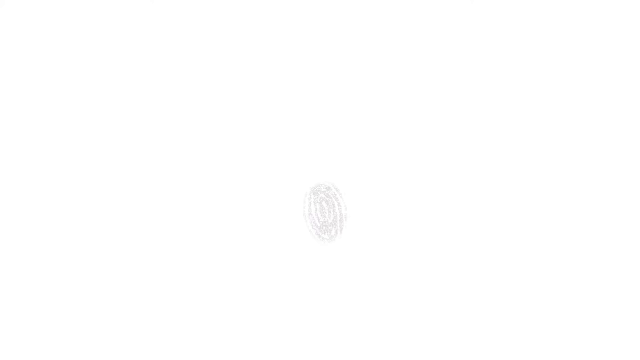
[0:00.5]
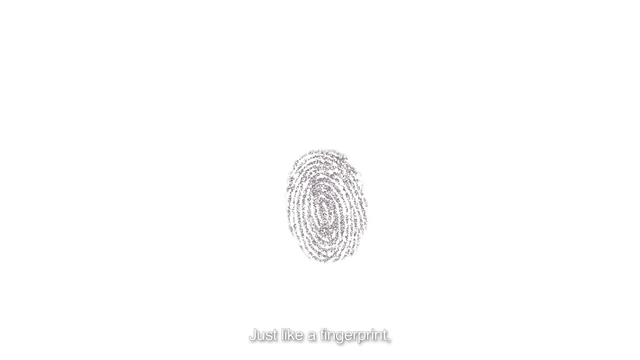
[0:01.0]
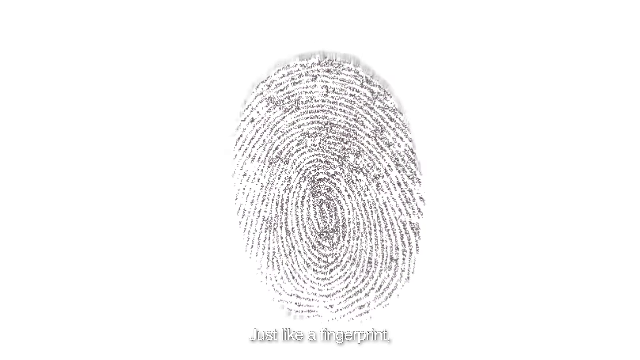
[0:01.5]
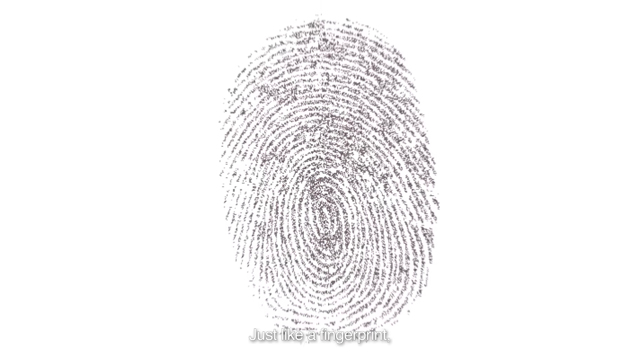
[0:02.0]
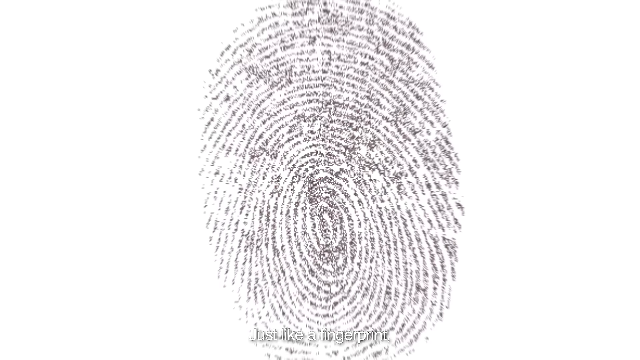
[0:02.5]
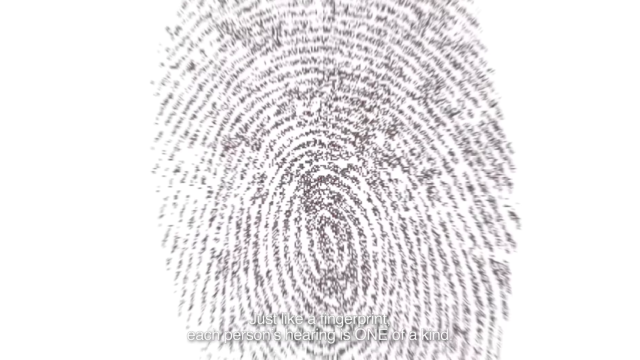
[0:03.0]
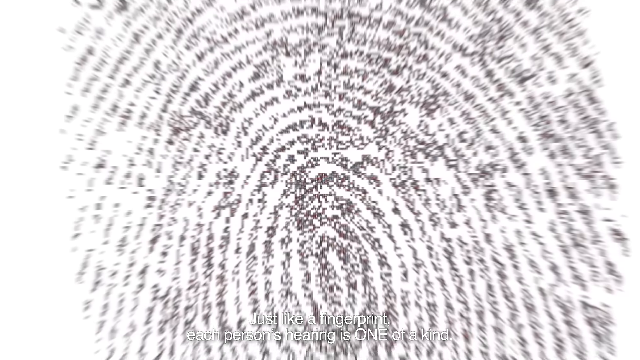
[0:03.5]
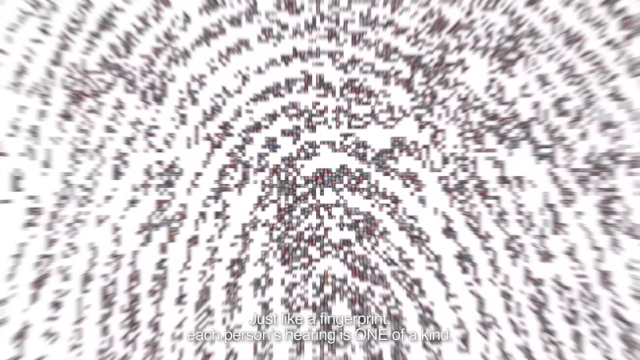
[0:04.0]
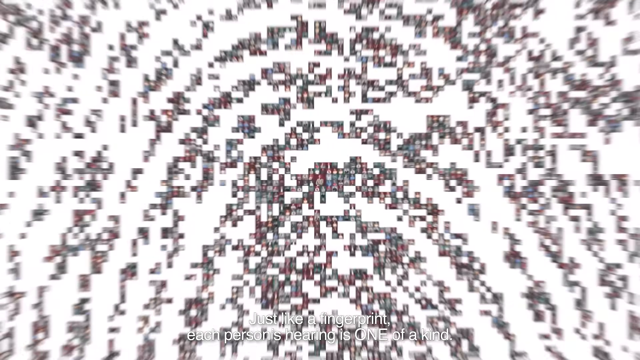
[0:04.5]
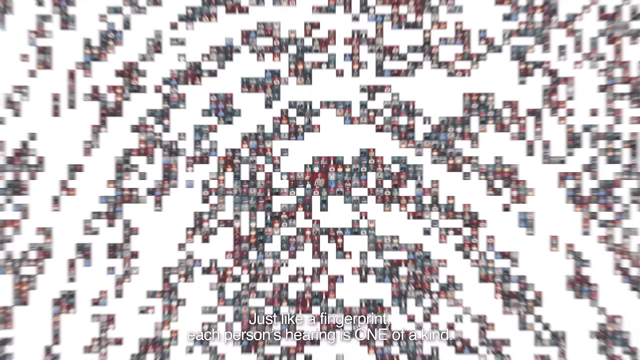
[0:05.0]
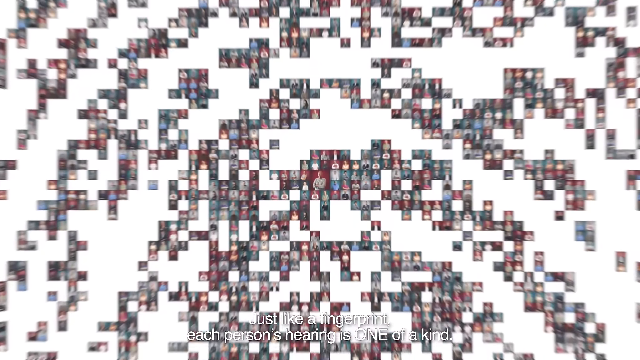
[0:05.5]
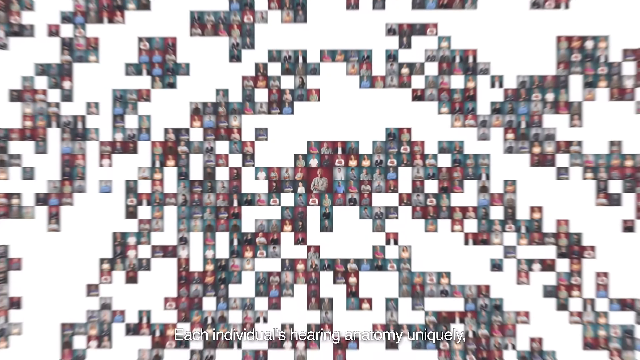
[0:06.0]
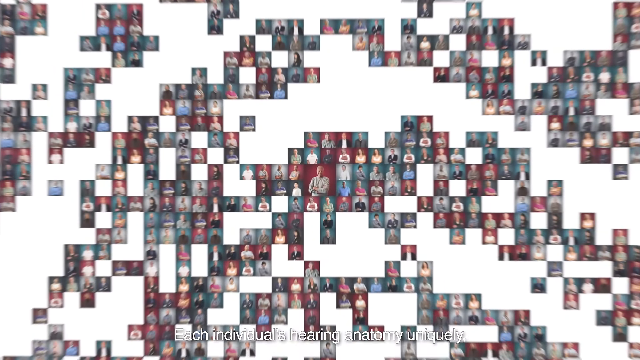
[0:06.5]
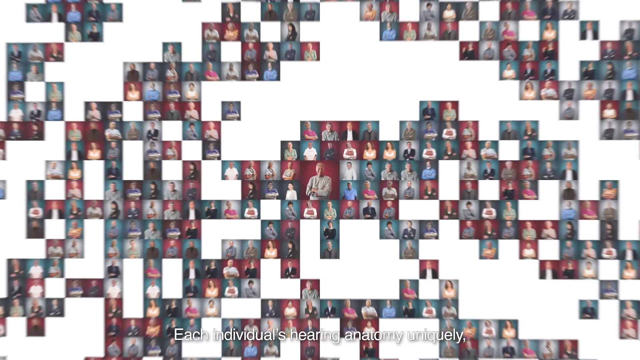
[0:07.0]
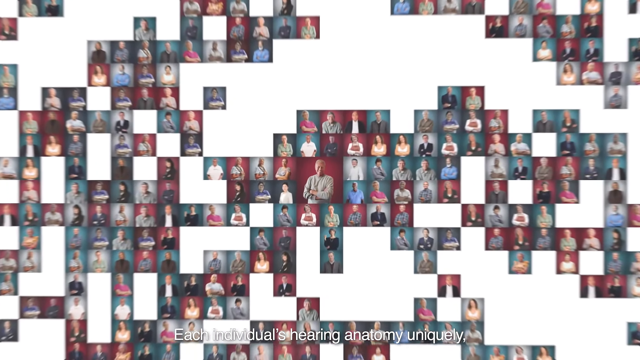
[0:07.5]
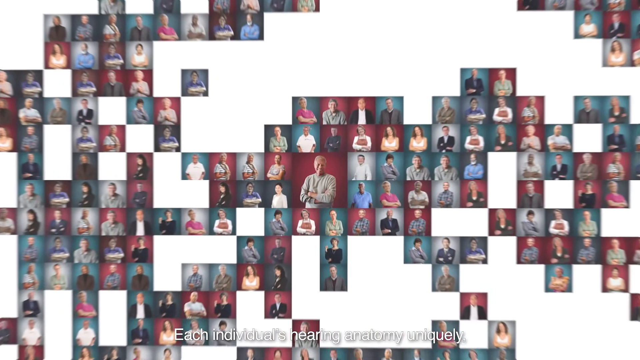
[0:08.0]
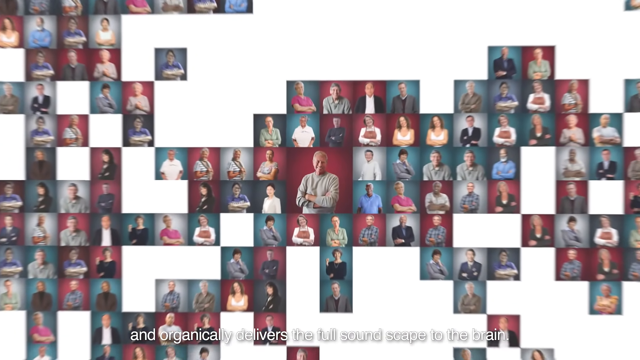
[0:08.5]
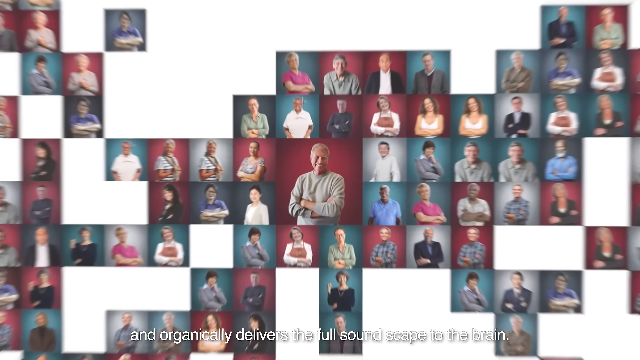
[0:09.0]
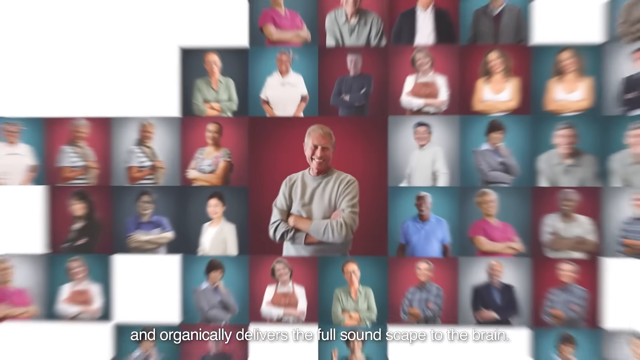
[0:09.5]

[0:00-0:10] A thumb fingerprint is shown. When the video zooms closer, the fingerprint seems to be a compilation of many thousands of photos: waist-up photographs of men and women in a professional-like pose. These small photographs are arranged in a spiral and act as single pixels of one image that represents a fingerprint. The zoom leads directly to a half-body picture of a white male in his 60s with blonde hair, smiling, surrounded by a thousand other pictures.